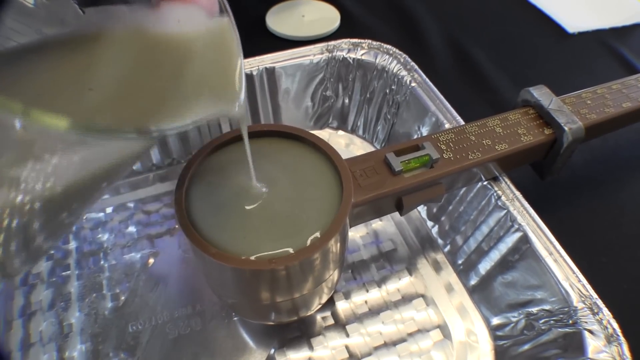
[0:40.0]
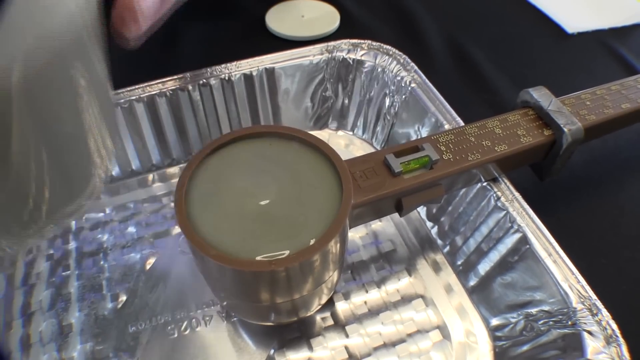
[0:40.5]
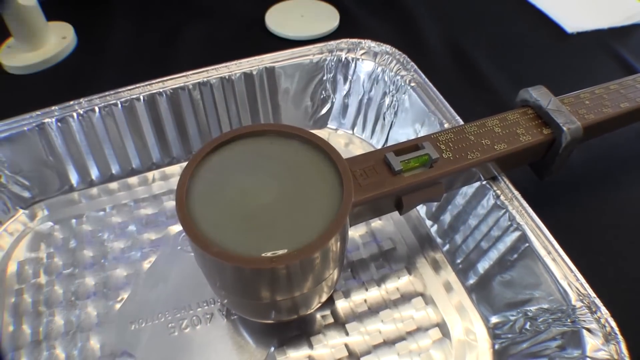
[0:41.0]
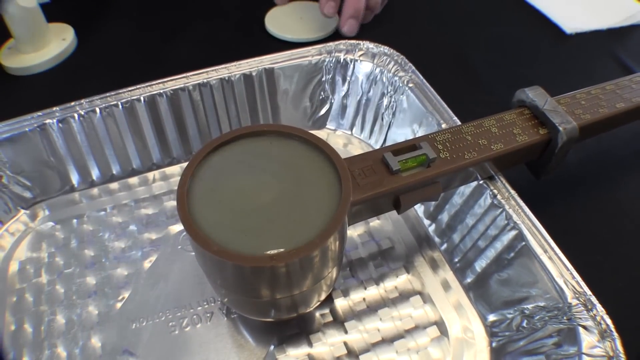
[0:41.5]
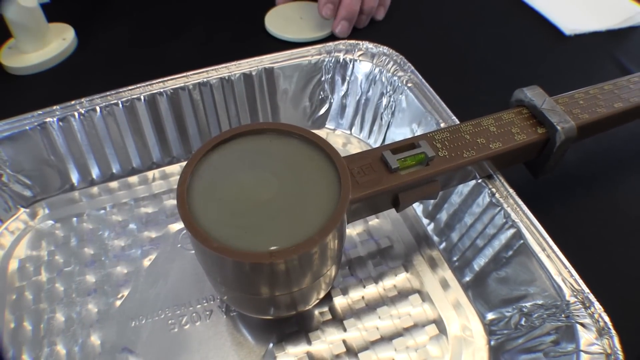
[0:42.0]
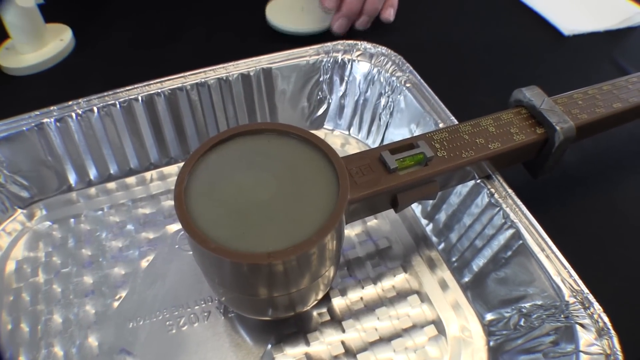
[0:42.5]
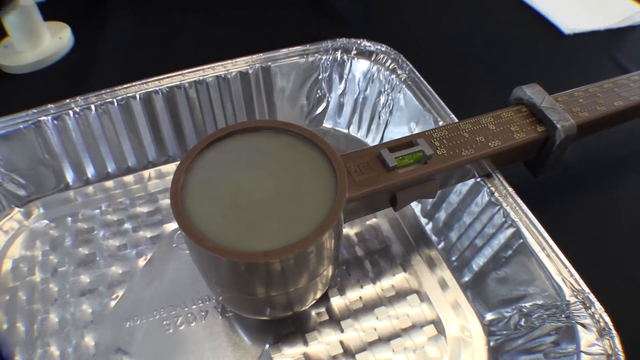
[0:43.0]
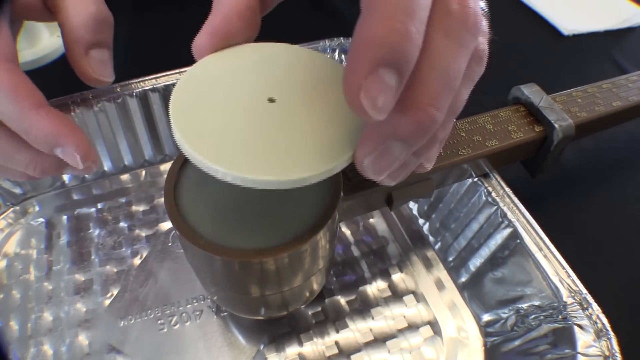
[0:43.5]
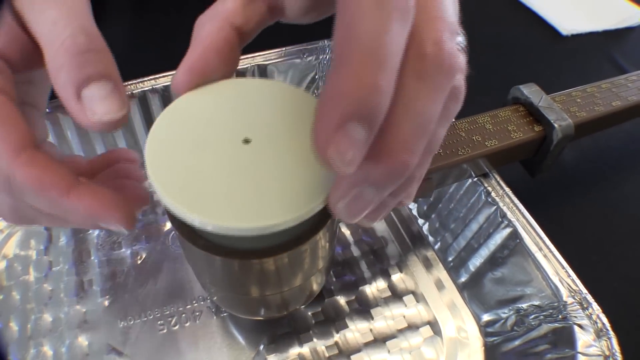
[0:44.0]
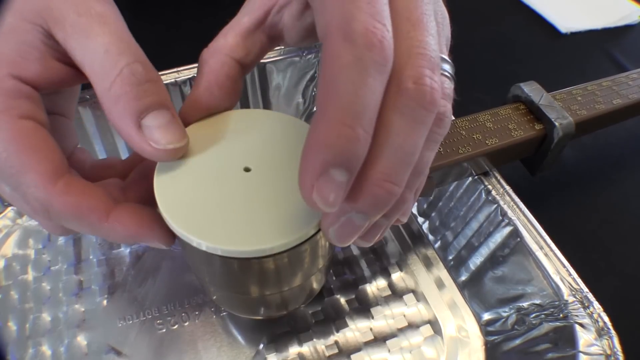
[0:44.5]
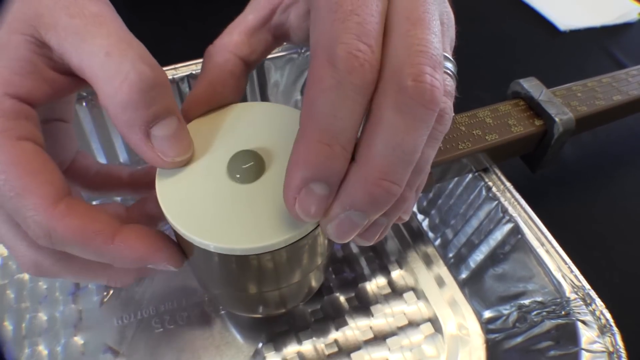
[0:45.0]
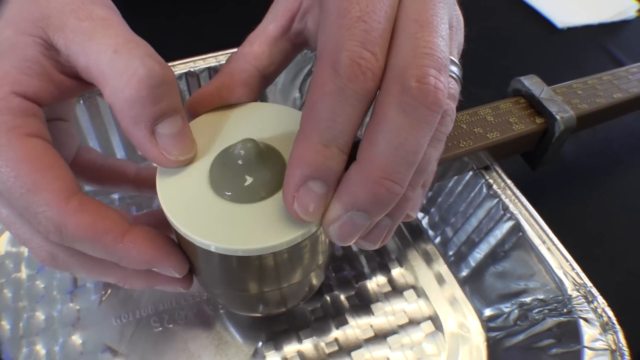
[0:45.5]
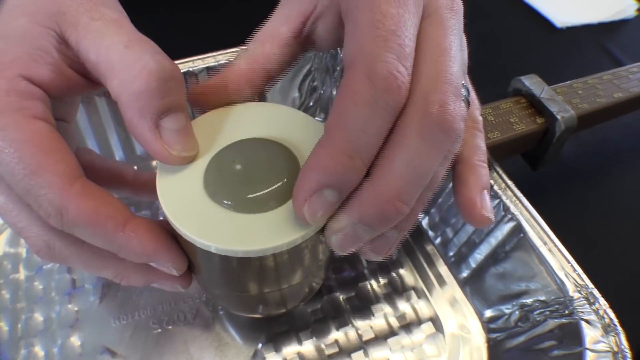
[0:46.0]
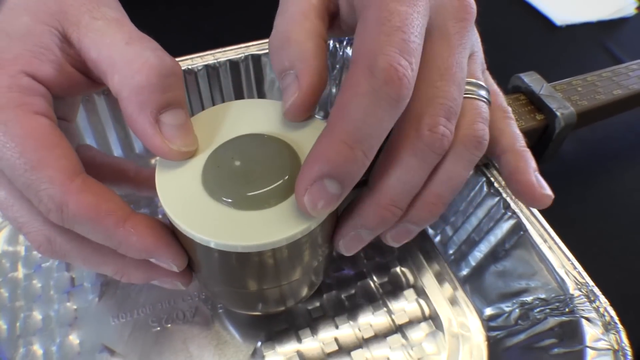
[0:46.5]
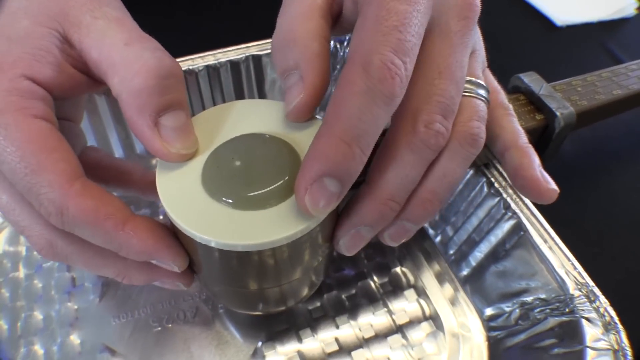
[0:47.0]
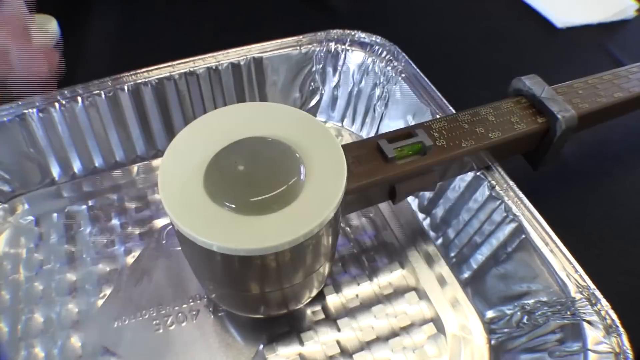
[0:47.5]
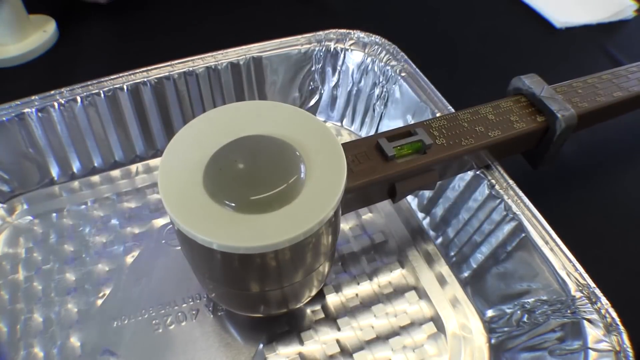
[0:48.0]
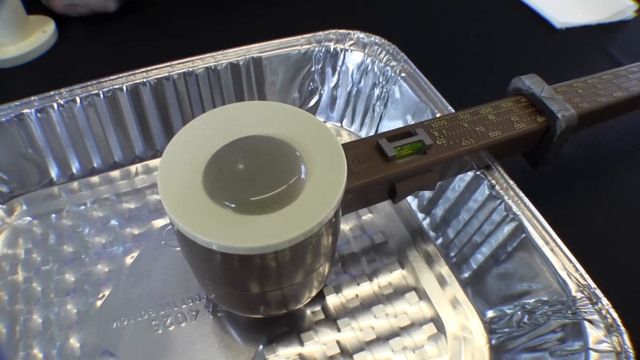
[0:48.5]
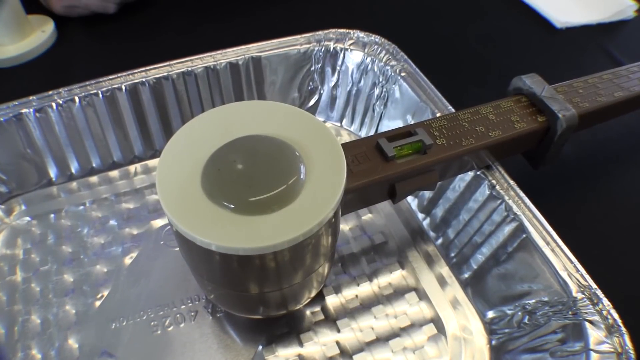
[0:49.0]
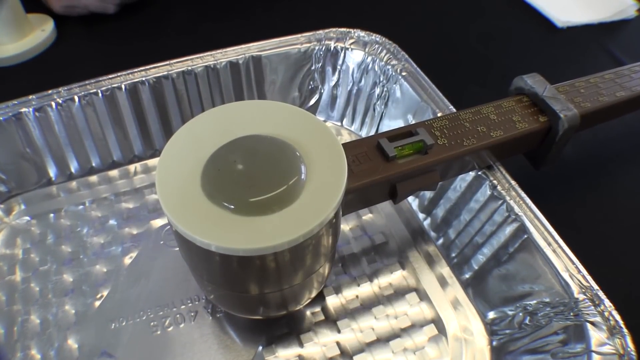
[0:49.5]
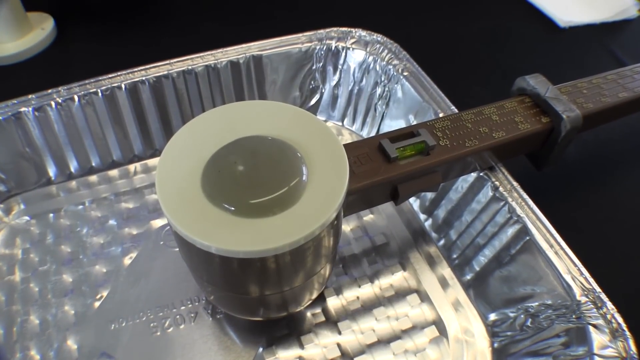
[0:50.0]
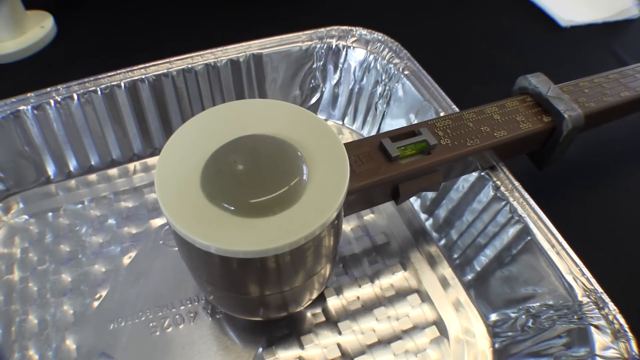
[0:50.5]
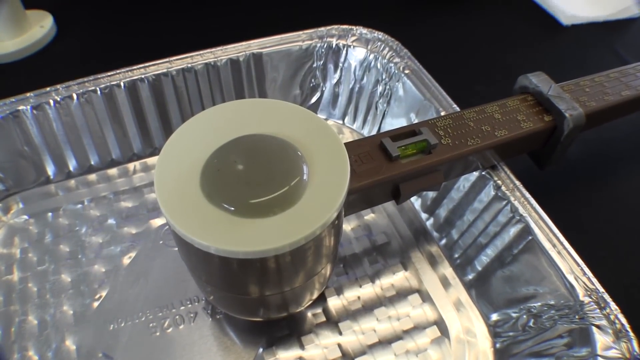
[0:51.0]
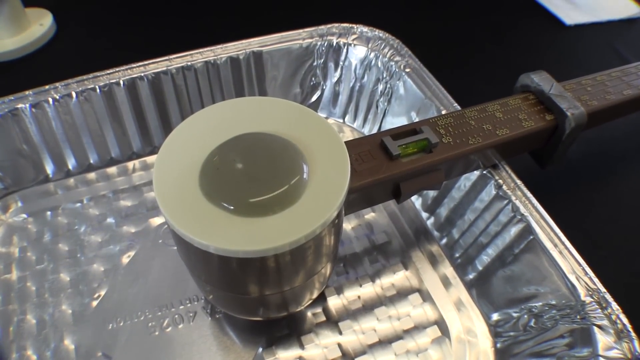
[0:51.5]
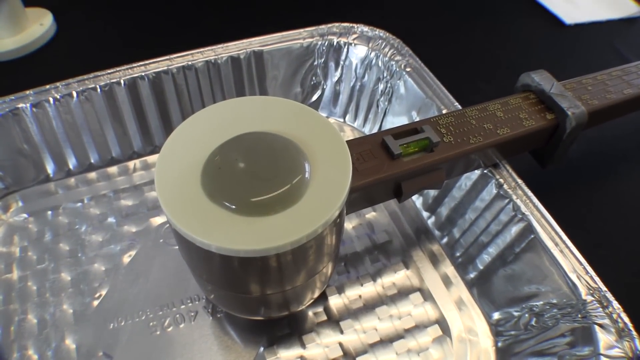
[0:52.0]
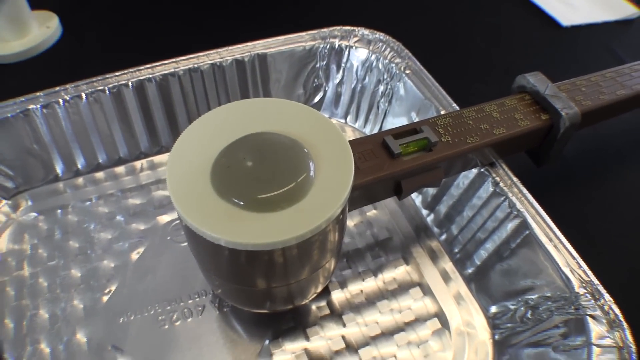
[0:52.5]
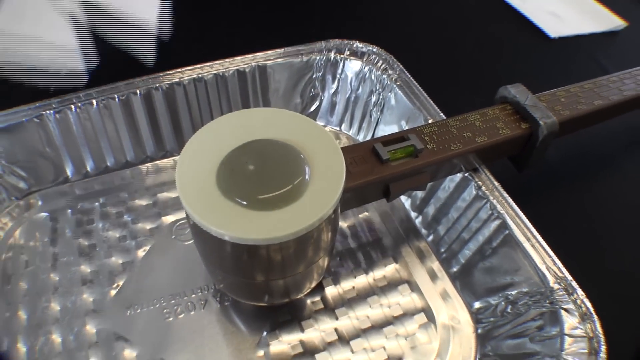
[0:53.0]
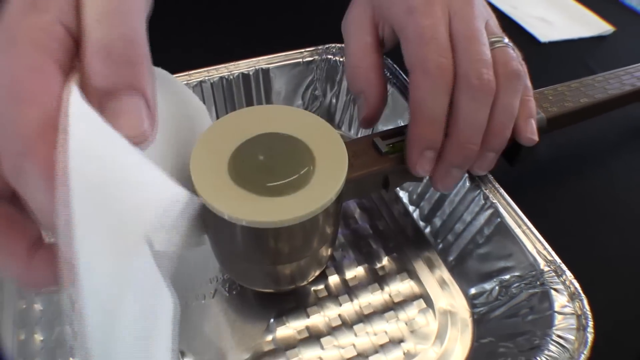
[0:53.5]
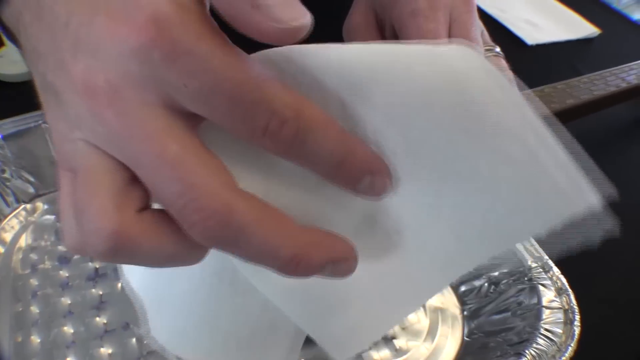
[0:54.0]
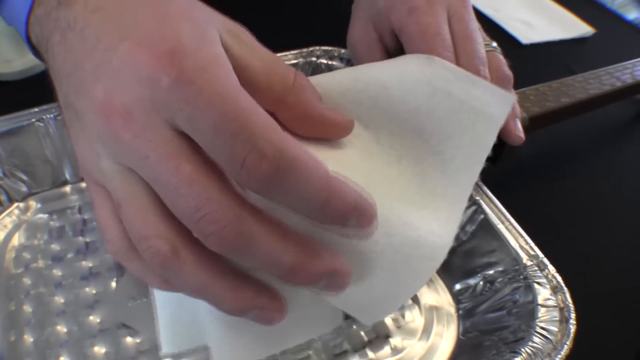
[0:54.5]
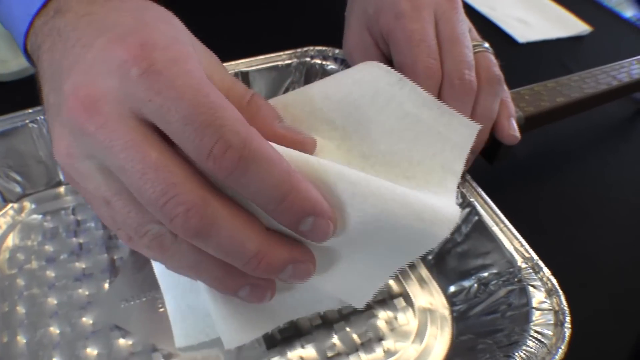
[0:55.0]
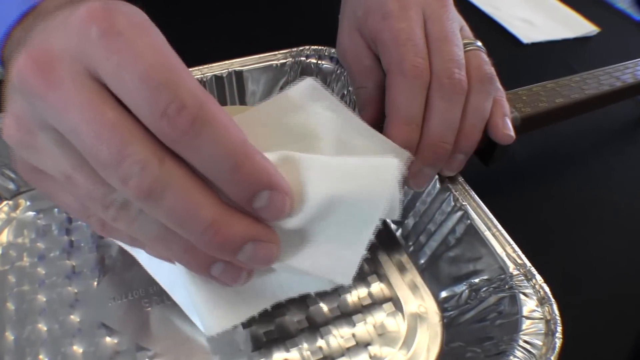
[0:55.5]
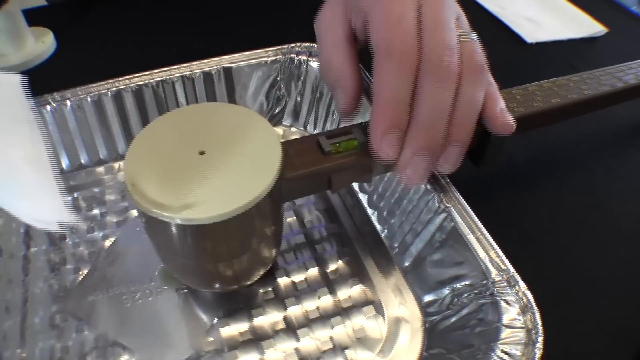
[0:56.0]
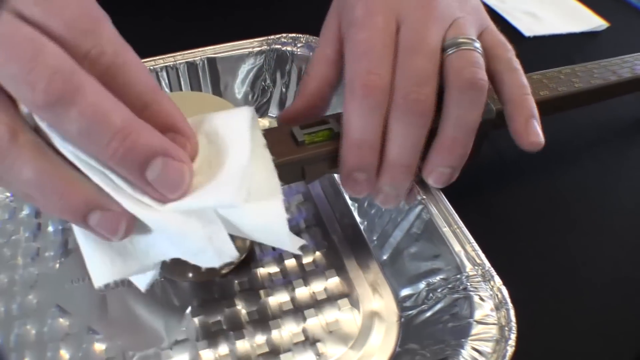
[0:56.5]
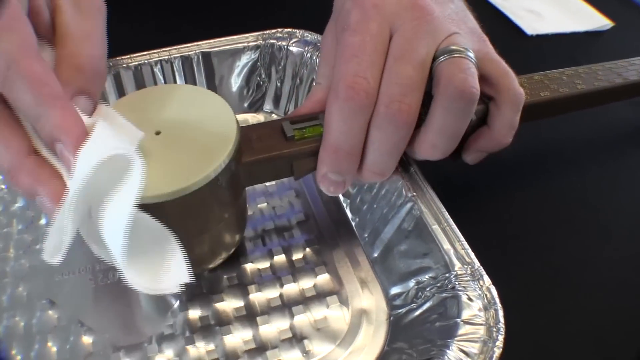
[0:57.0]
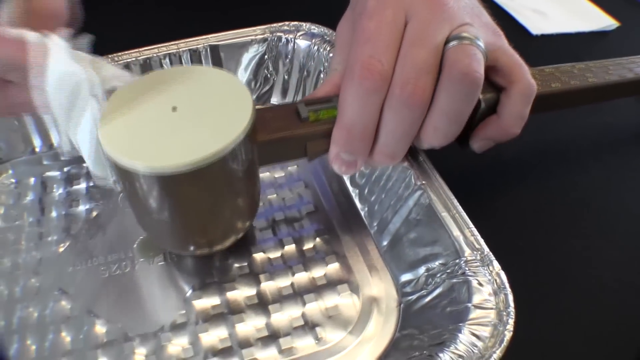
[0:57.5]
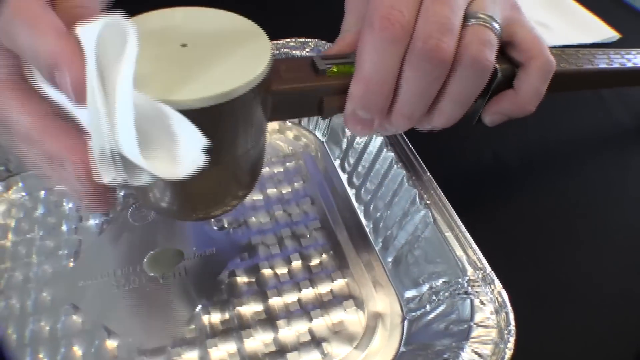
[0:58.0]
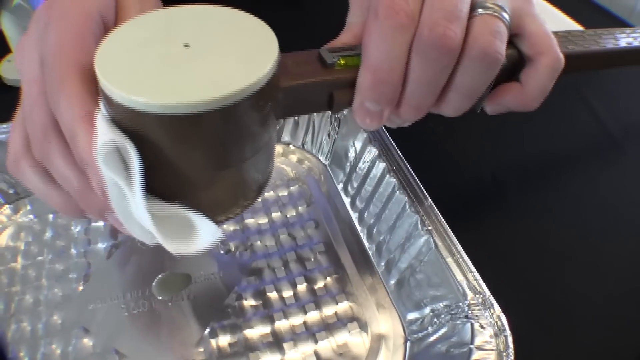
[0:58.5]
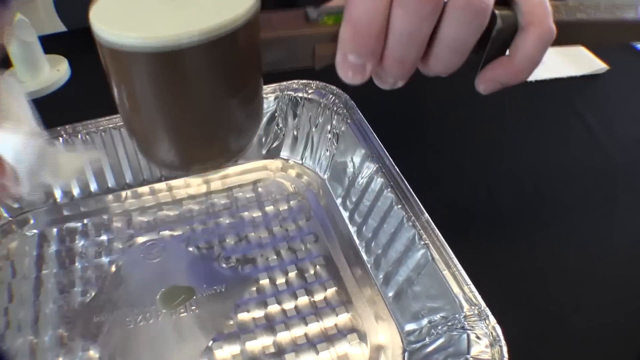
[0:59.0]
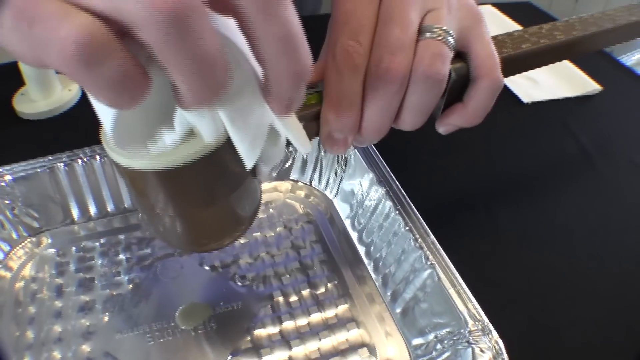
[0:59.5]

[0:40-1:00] The person finishes pouring the mud into the cup, filling it all the way to the top brim. He then lays the white disc, which has a hole in the middle, on top of the opening of the cup. When he presses down, some of the mud pours out of the middle hole like a spout, leaving a small amount of mud on the disc. Holding the apparatus by the rod with his left hand, he wipes the excess mud off the white disc with a paper towel in his right hand.